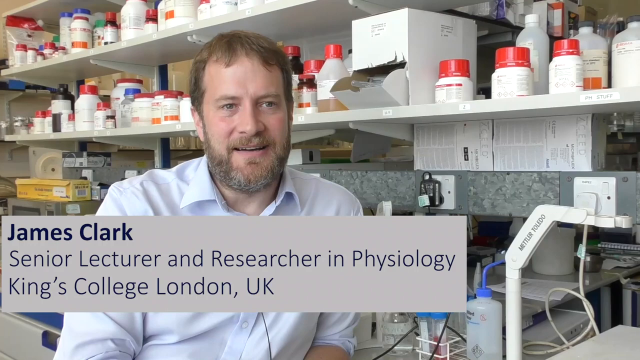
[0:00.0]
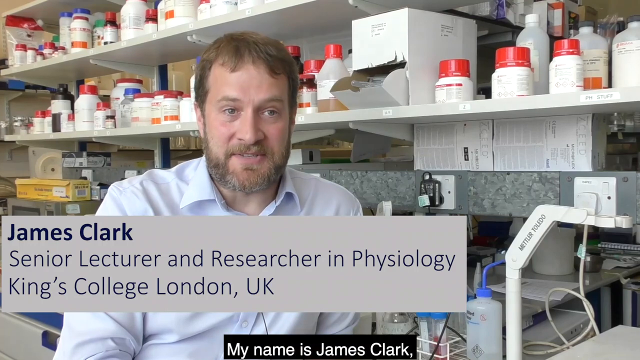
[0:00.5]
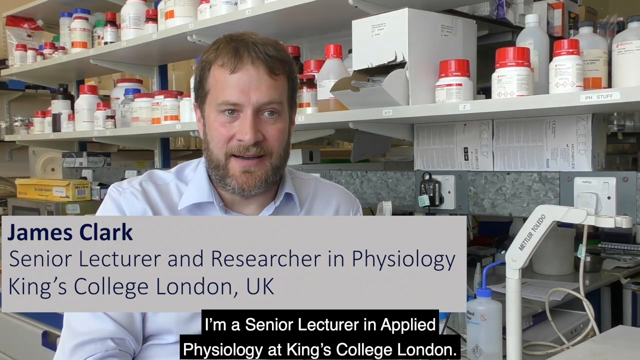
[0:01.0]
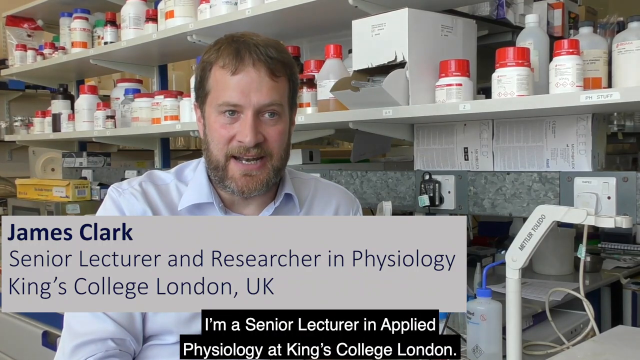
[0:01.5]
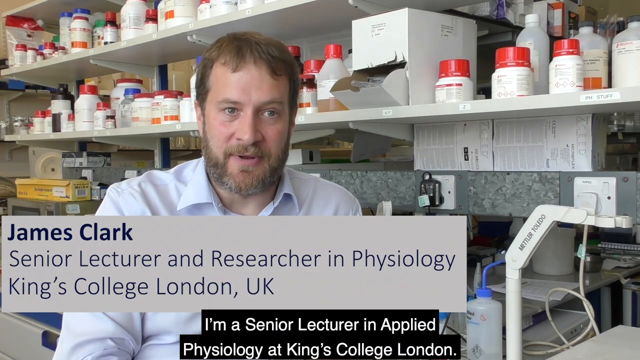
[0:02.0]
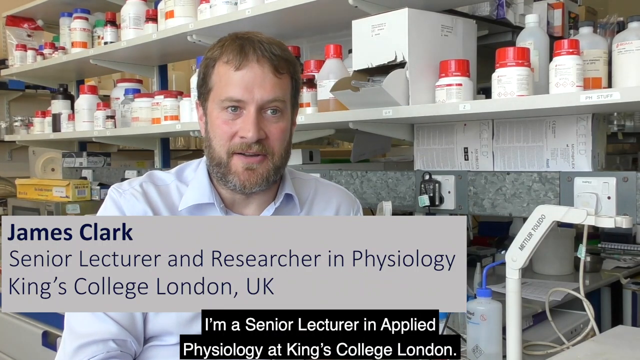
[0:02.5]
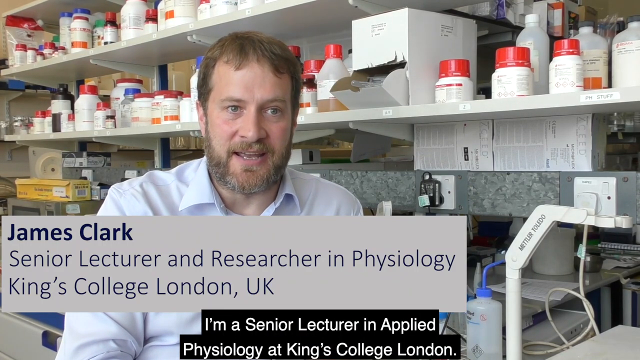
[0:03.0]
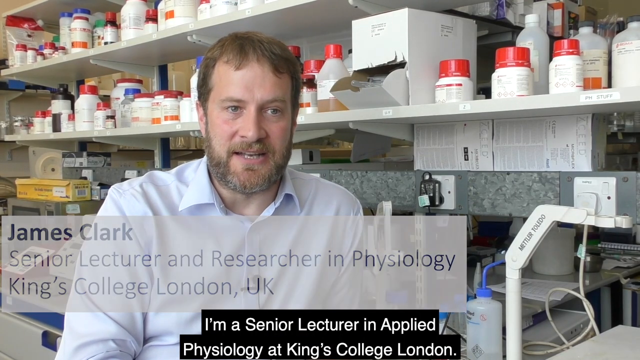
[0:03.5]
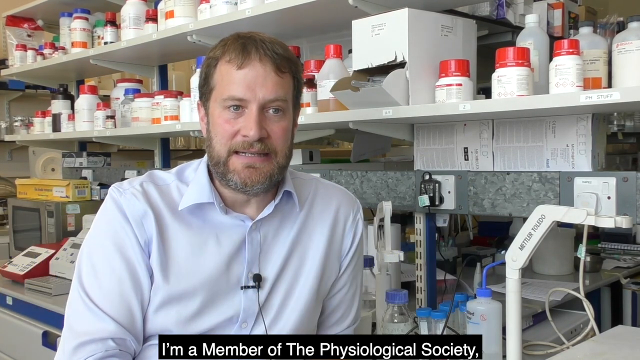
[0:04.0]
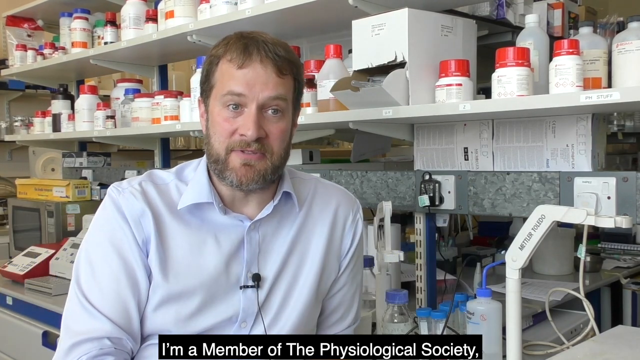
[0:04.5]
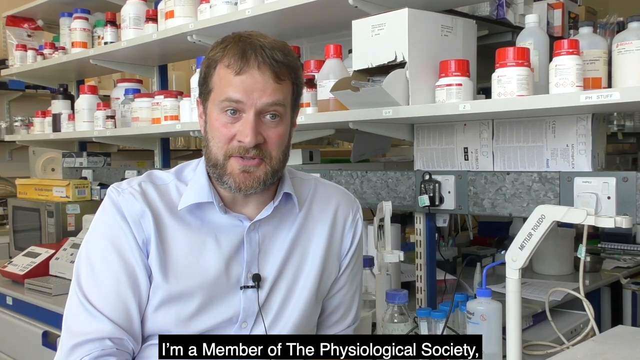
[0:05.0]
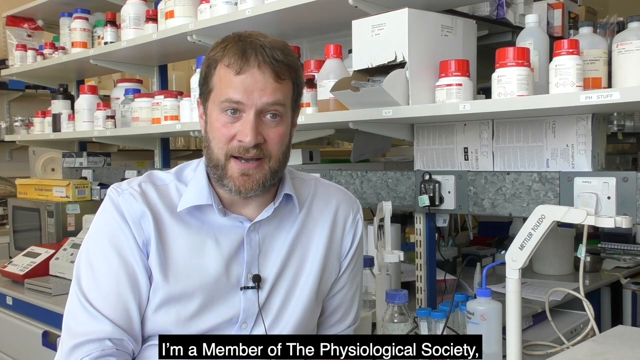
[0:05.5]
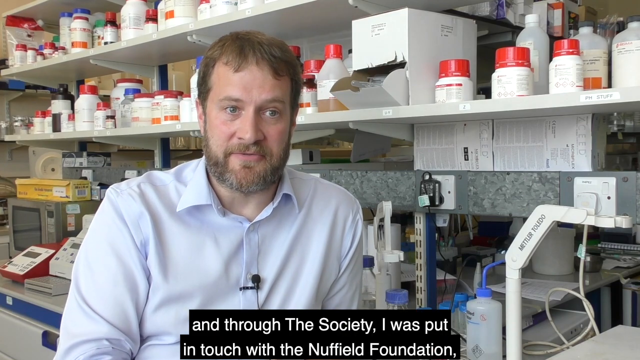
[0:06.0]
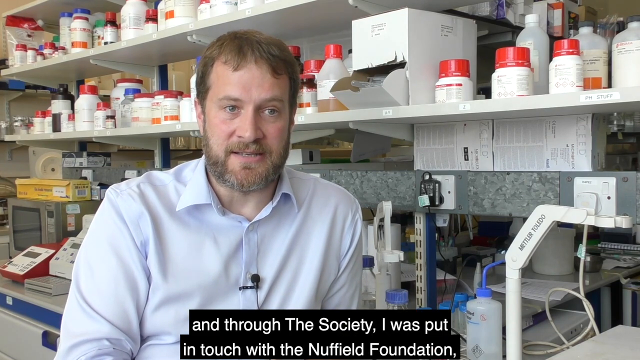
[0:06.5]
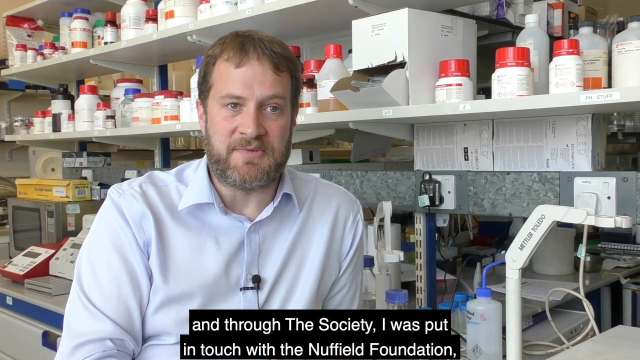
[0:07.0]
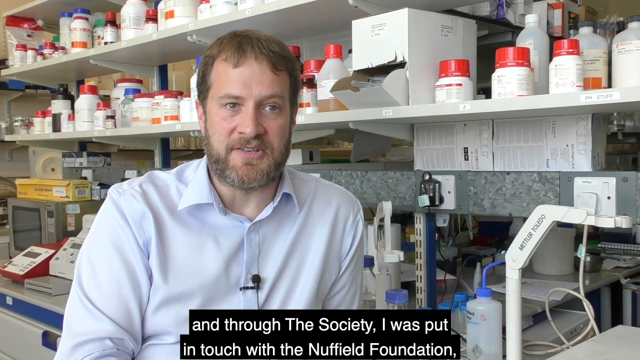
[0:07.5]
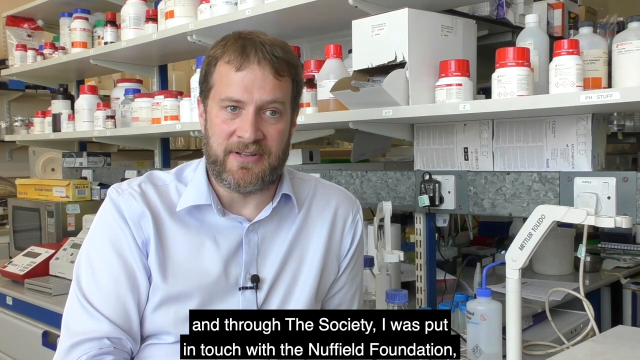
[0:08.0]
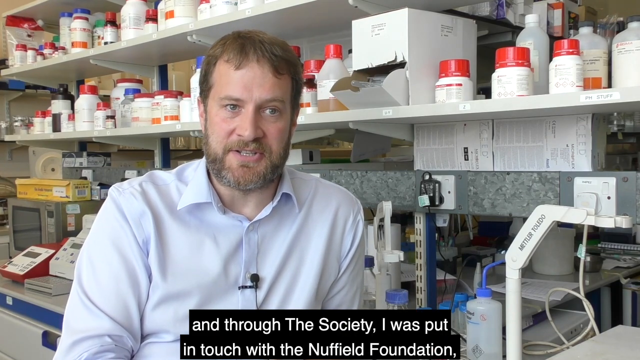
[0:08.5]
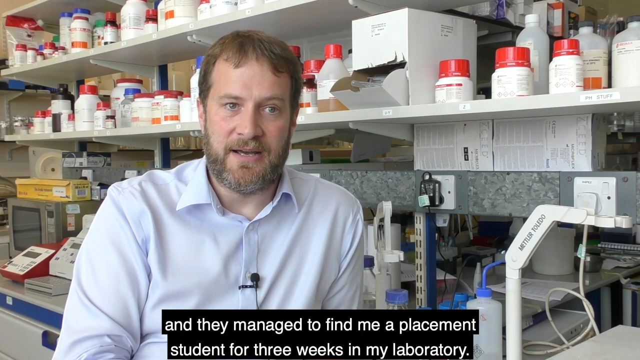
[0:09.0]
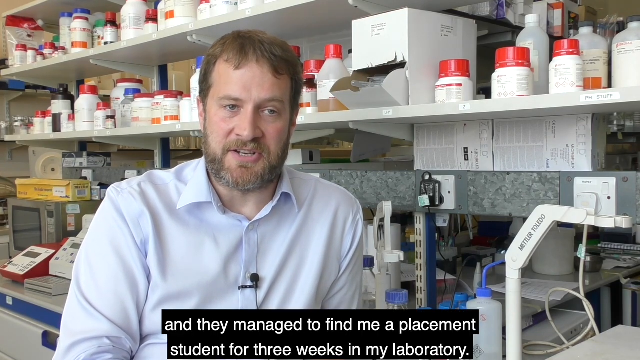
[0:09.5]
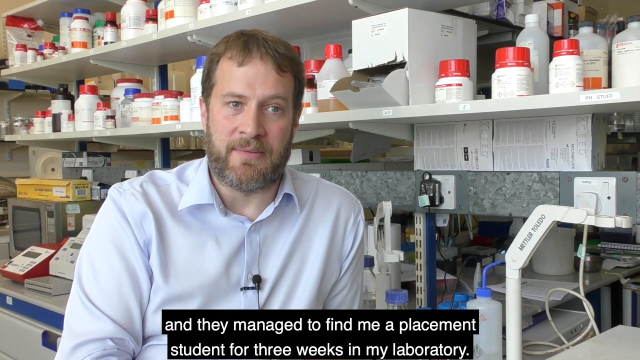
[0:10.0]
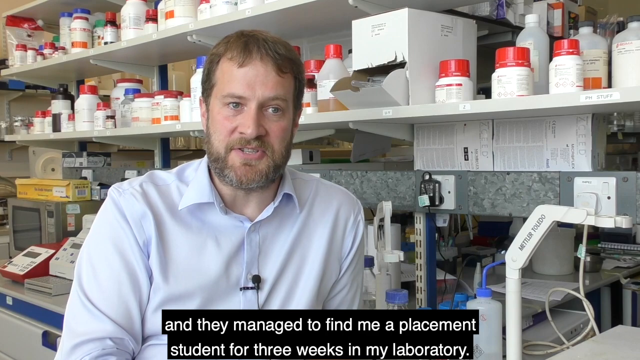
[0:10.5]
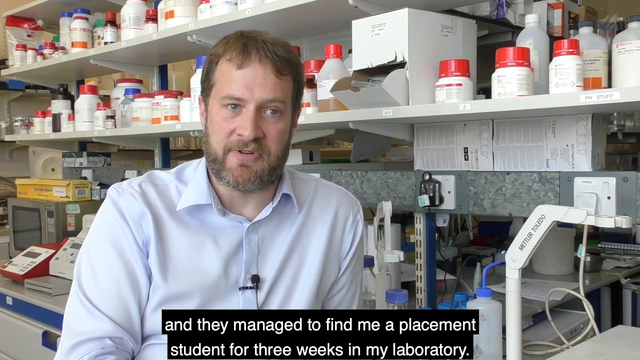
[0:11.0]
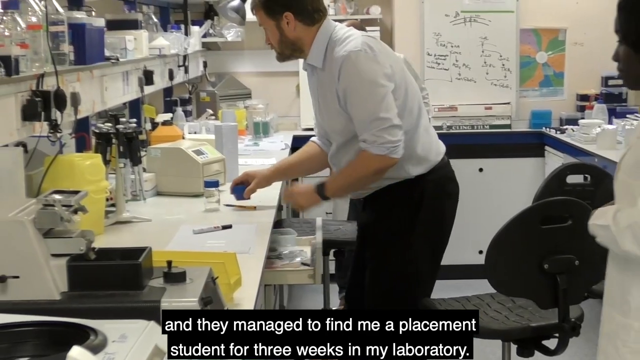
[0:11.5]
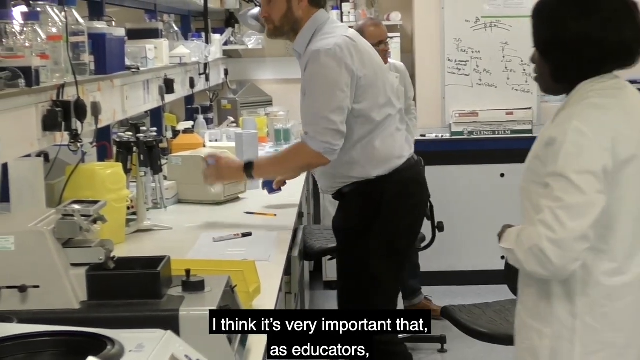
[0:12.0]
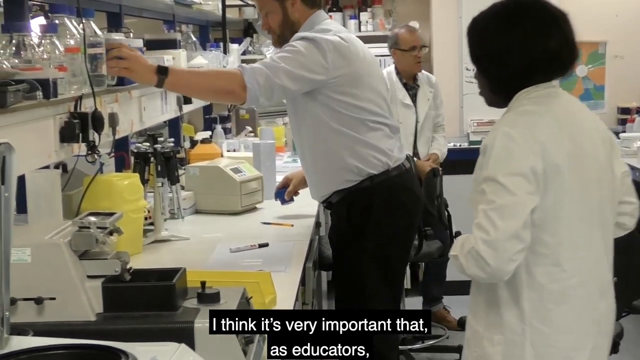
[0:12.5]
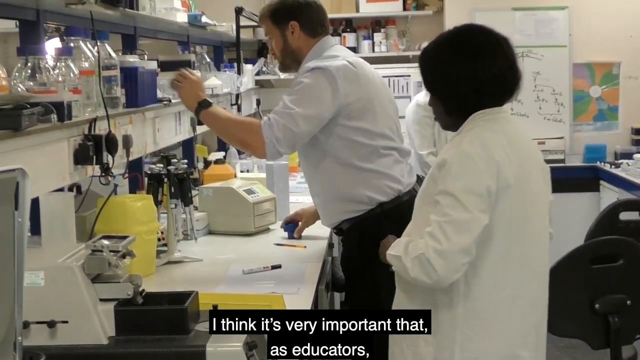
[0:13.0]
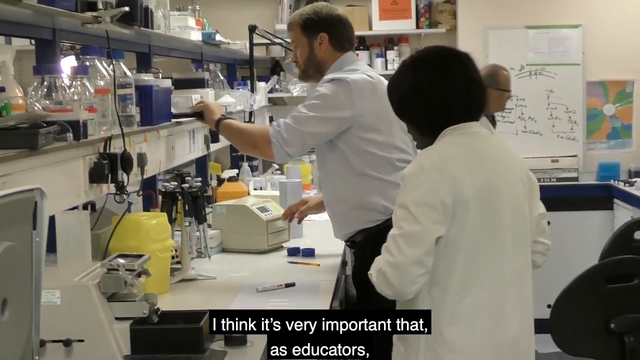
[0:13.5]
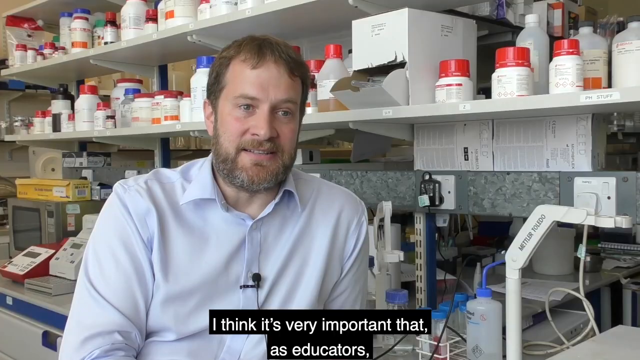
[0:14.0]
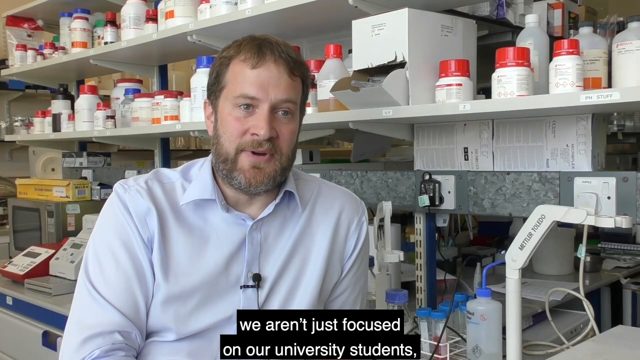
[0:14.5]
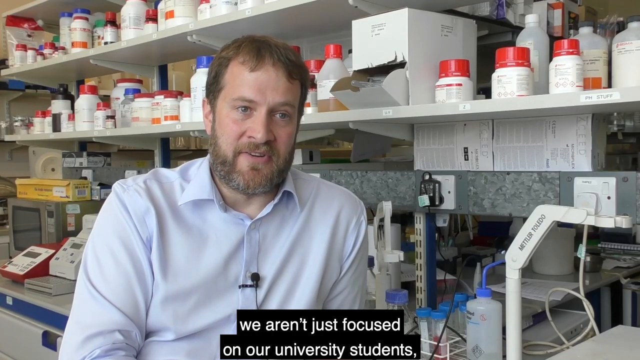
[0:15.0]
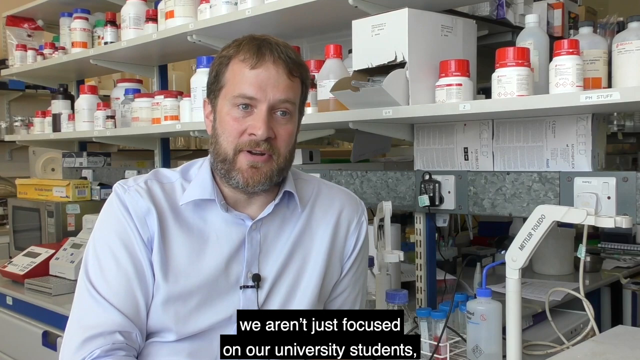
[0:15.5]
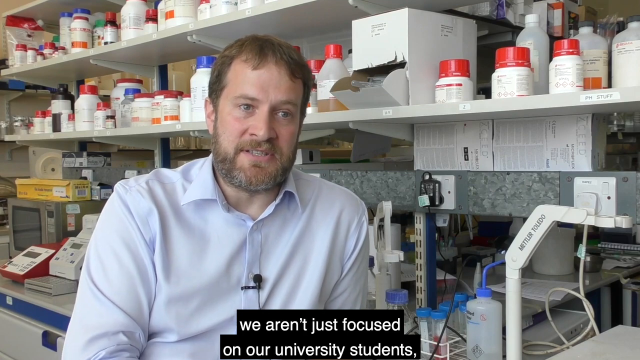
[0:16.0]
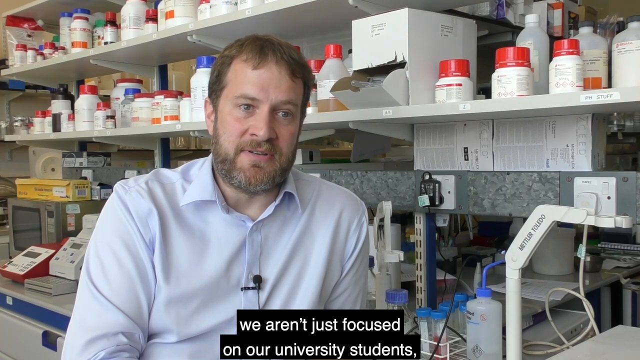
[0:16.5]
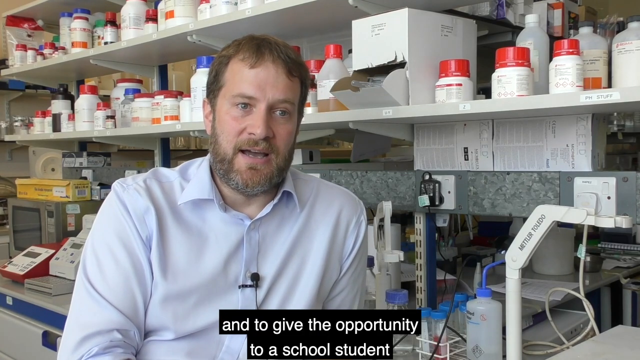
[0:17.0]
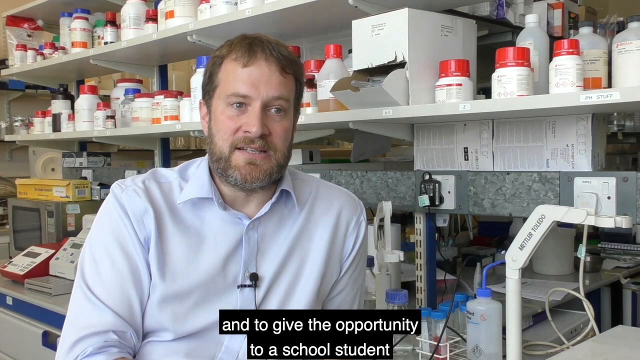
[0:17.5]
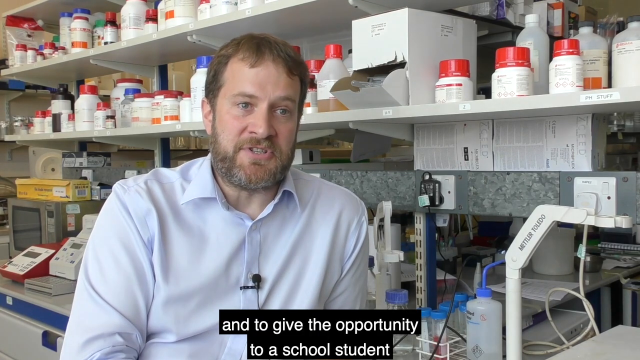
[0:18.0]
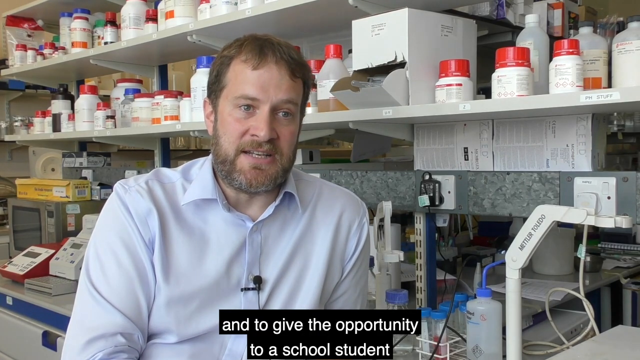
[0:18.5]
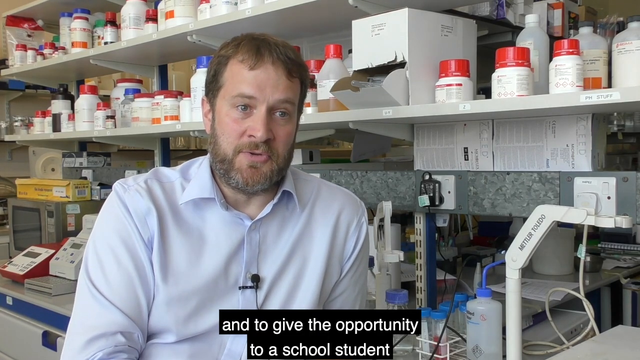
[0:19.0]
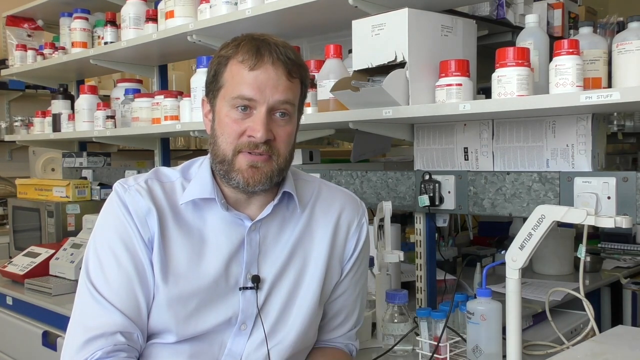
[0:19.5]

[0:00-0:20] A man is in what appears to be a laboratory, or possibly the back room of a pharmacy or clinic. He is sitting and wears a long-sleeved, light blue button-down shirt with the sleeves rolled up to his elbows. He talks to someone behind the camera. He has light brown hair, a mustache and a beard, and looks to be in his mid 40s to 50. In the lower left-hand corner of the screen is a gray rectangle; at its top left, his name, "James Clark", is written in navy font, and below that it reads "senior lecturer and researcher in physiology, King's College, London, UK". Behind him are shelves filled with what appear to be pill bottles, most of them white with red caps; they have writing on them that is difficult to discern. Toward the end, the video shifts briefly to another shot showing two other people: a dark-skinned Black woman, and a man who looks older than James, in the background.